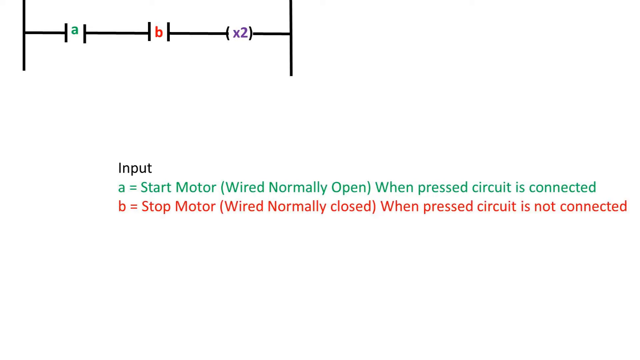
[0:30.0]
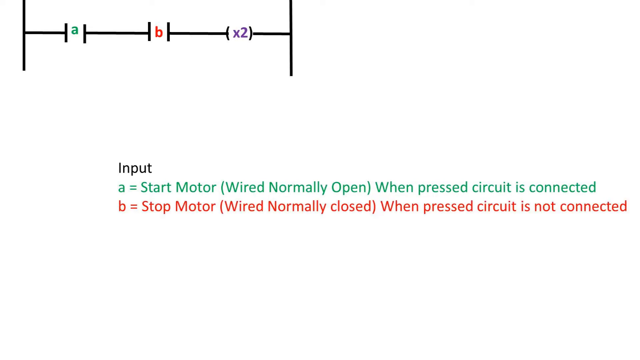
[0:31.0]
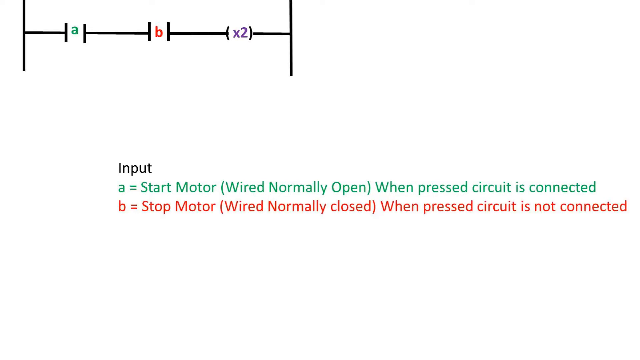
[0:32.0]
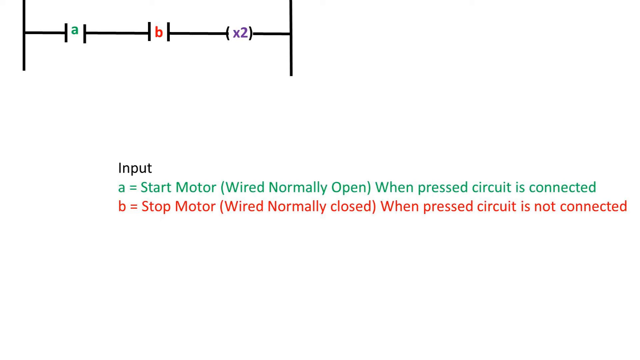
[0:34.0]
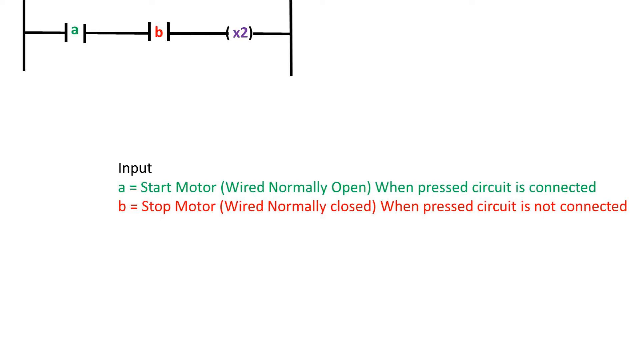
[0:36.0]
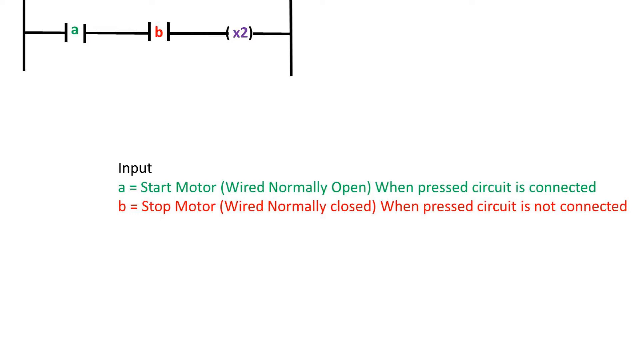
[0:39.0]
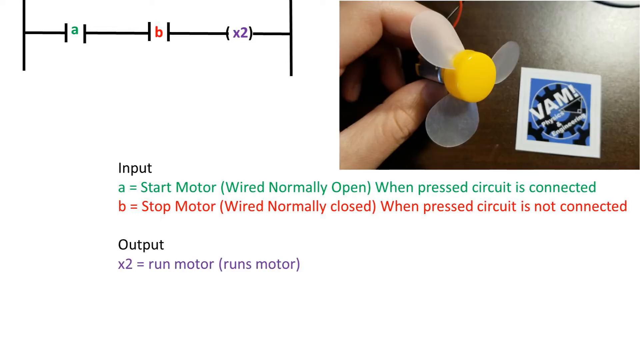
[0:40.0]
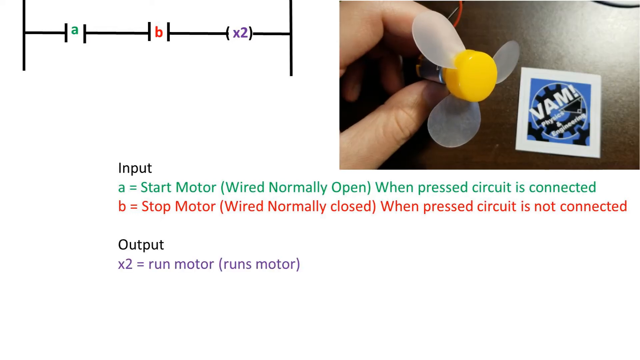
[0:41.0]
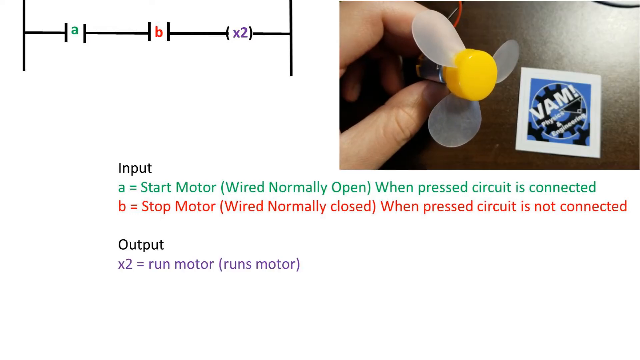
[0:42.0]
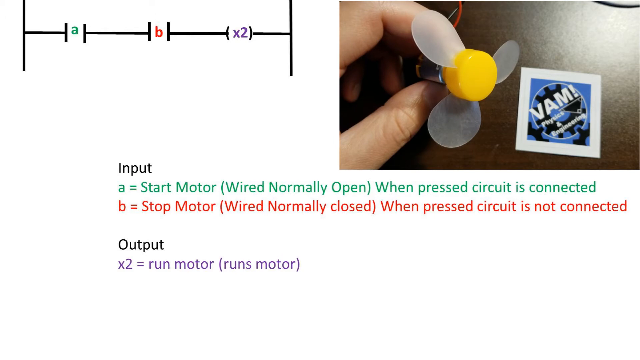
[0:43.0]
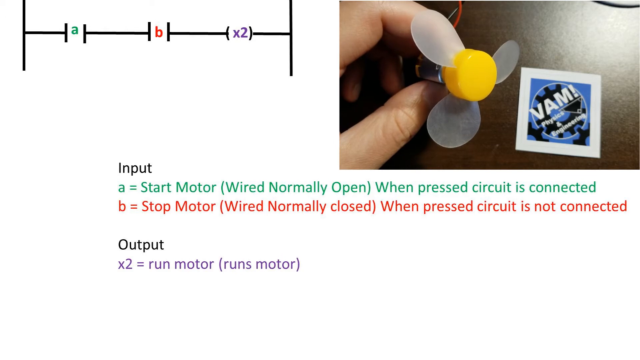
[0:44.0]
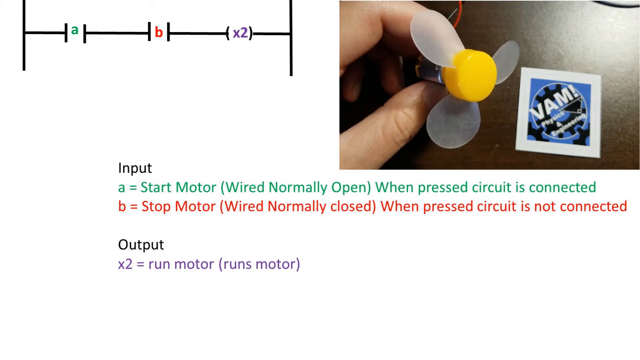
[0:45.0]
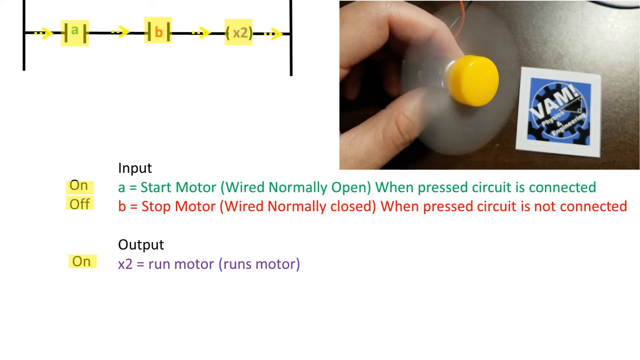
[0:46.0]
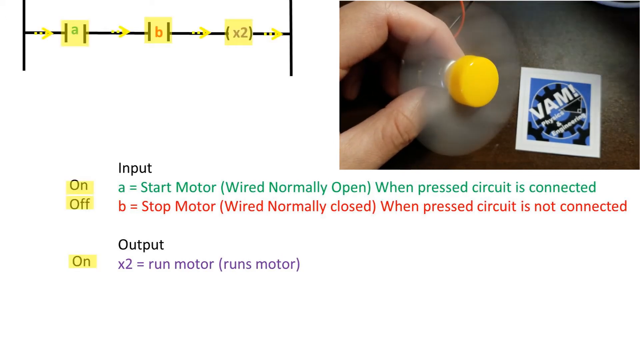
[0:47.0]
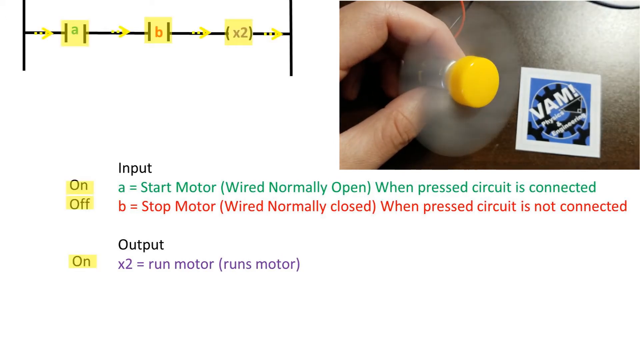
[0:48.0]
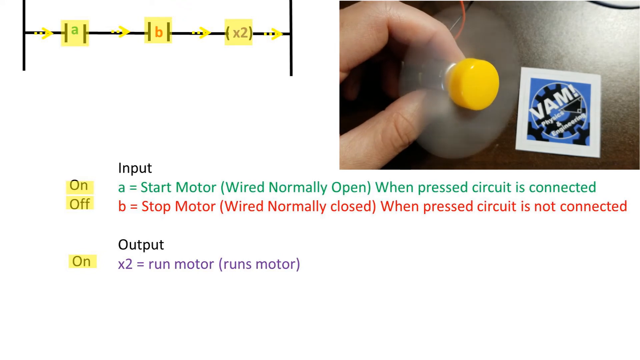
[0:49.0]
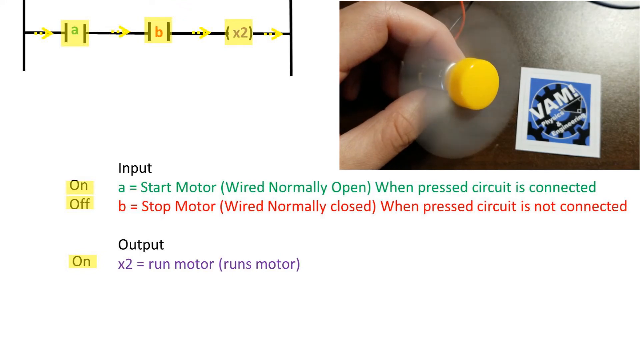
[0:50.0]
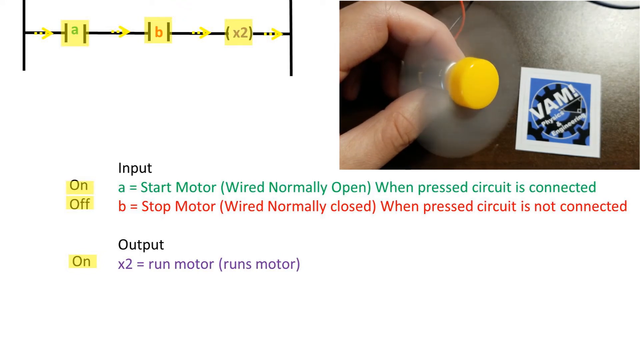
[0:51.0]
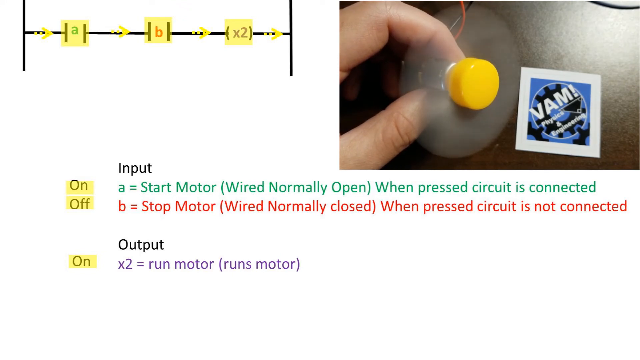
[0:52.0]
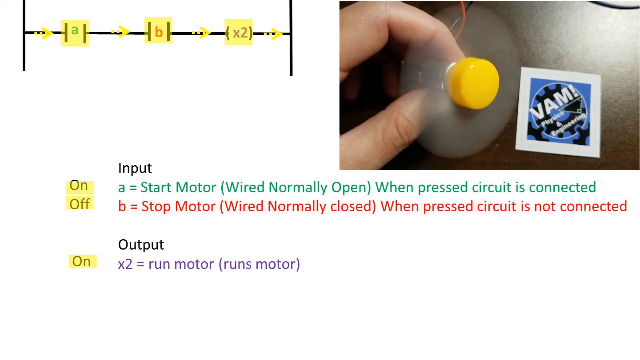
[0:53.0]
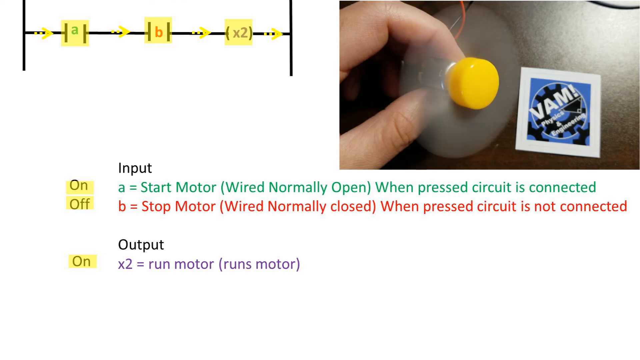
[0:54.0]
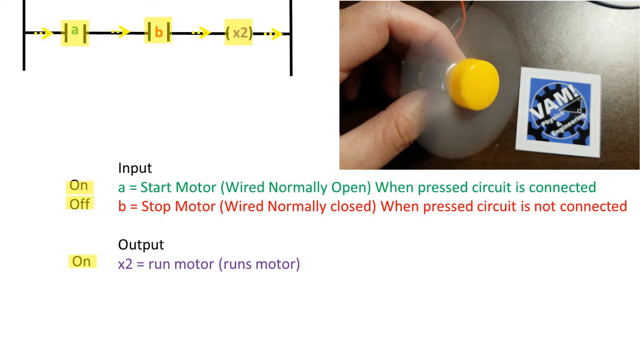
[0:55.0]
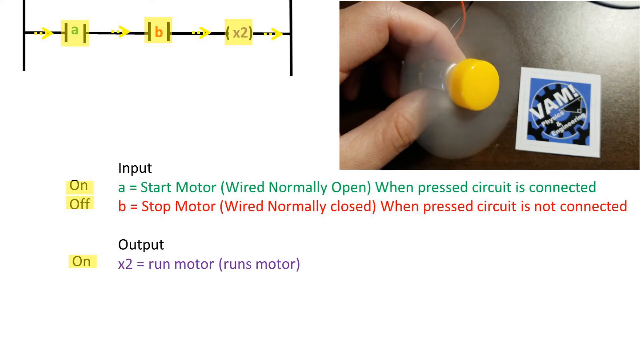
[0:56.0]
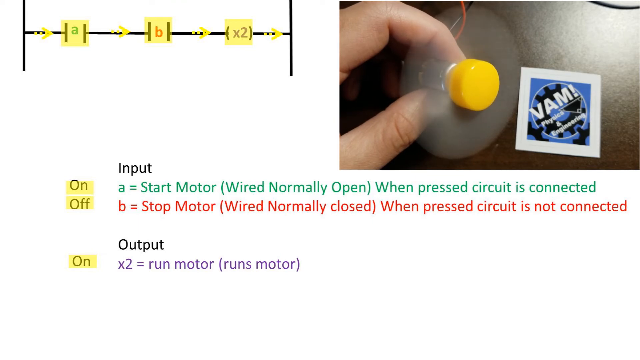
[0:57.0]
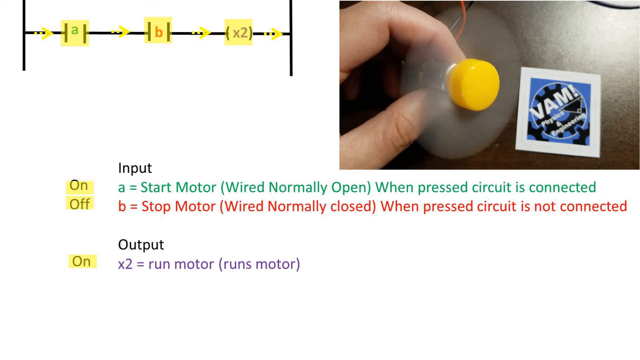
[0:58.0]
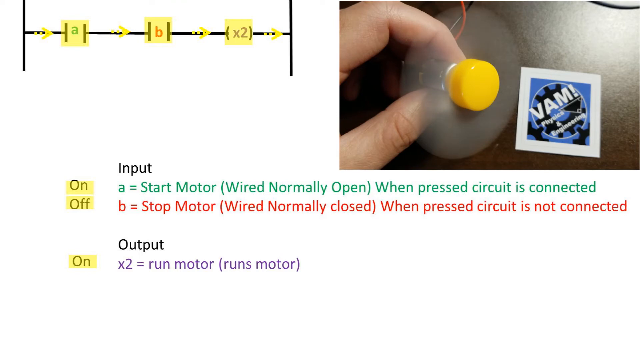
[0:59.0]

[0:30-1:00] The experiment's instructions are shown. At the top are the same A in green, B in red, and "times 2", with arrows drawn in black. For the input, A reads "start motor, wired normally open" and "when pressed circuit is connected", while B, written in red, reads "stop motor, wired normally closed when pressed circuit is not connected". The object of the experiment looks like a flower, yellow and transparent, and fingers hold it as the experiment runs. "Output" is written in yellow. Different colors highlight the points in the instructions.